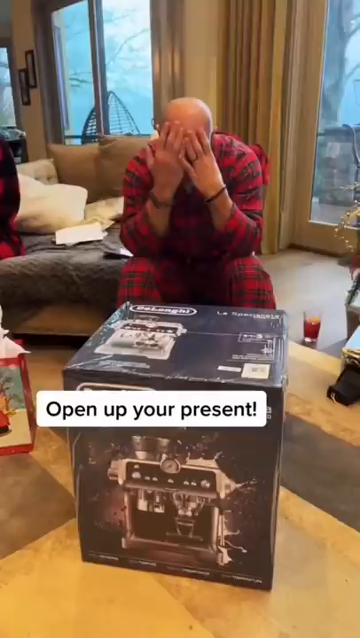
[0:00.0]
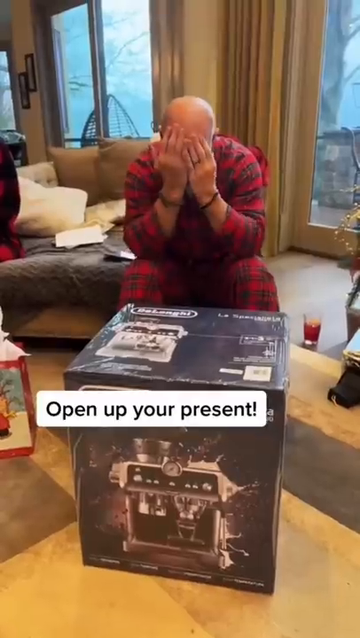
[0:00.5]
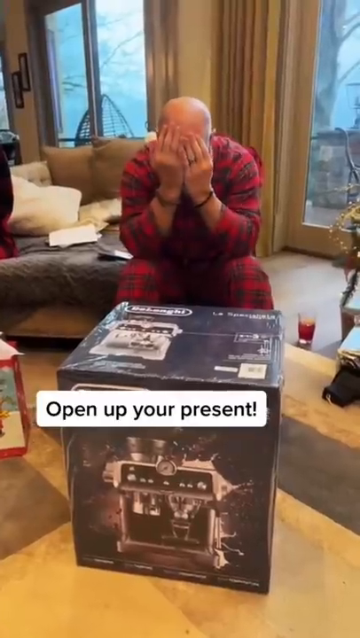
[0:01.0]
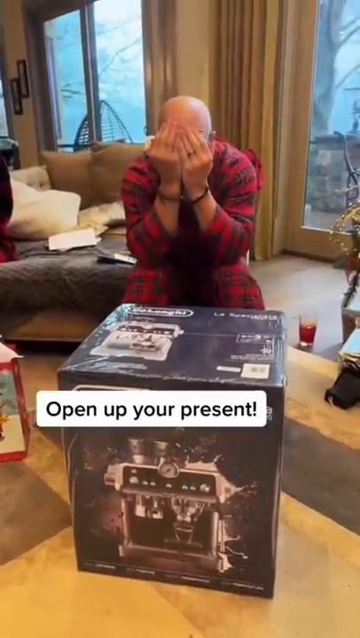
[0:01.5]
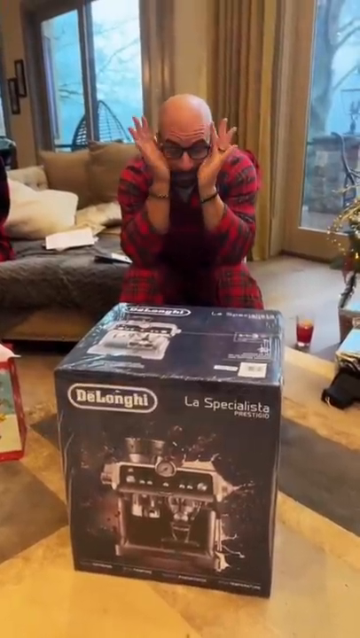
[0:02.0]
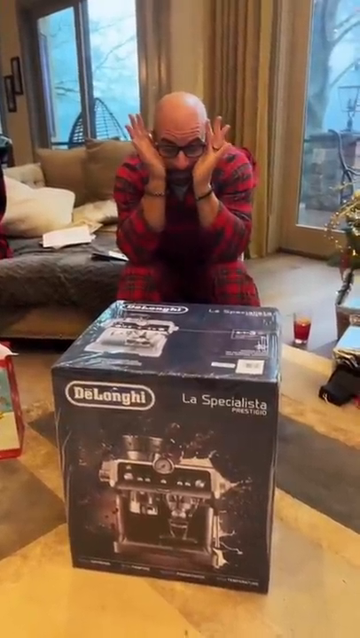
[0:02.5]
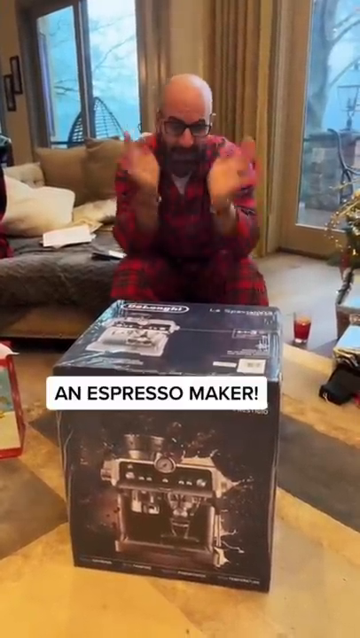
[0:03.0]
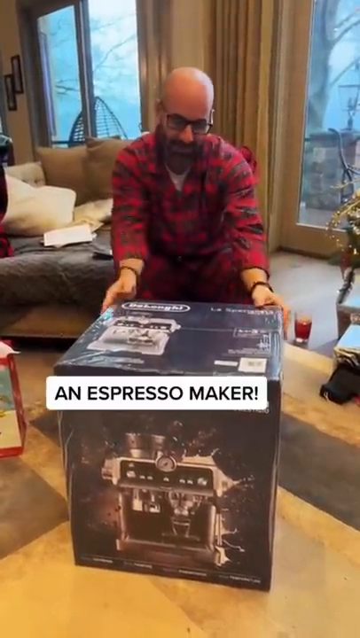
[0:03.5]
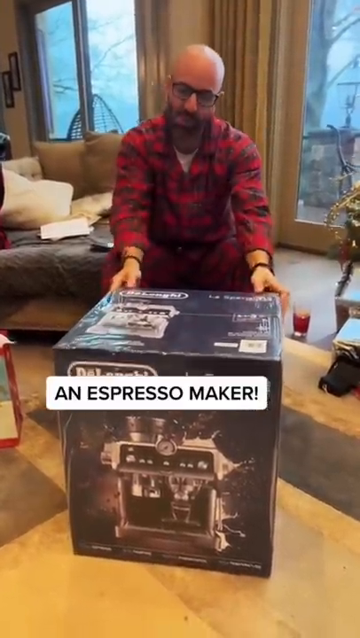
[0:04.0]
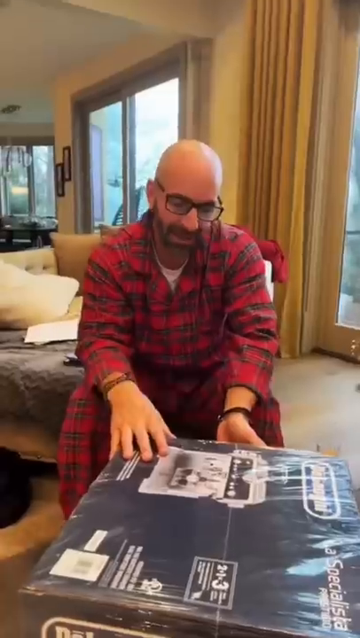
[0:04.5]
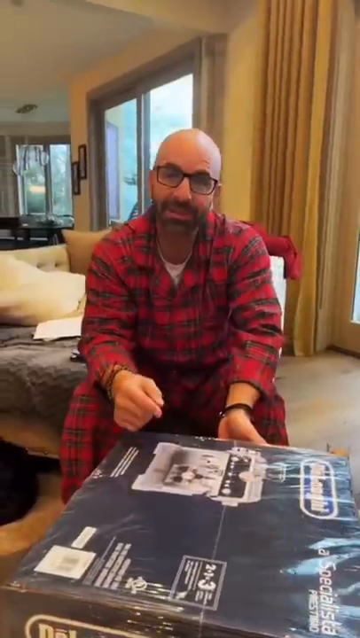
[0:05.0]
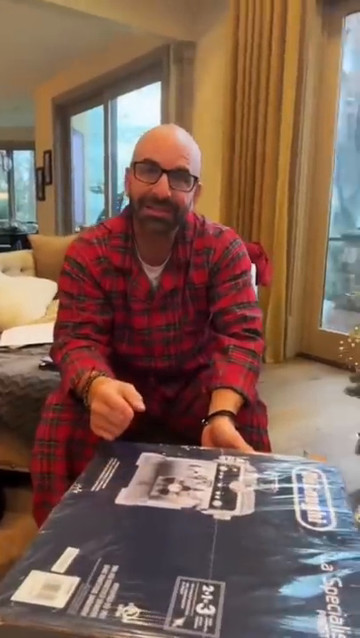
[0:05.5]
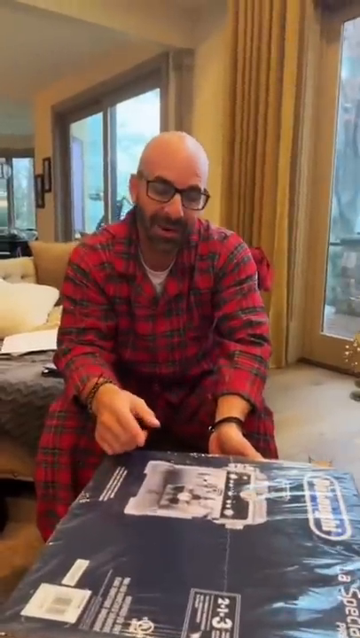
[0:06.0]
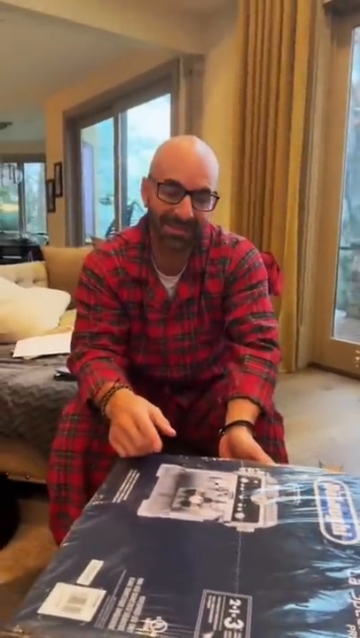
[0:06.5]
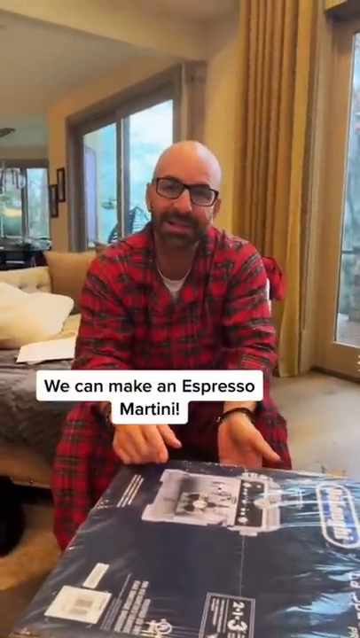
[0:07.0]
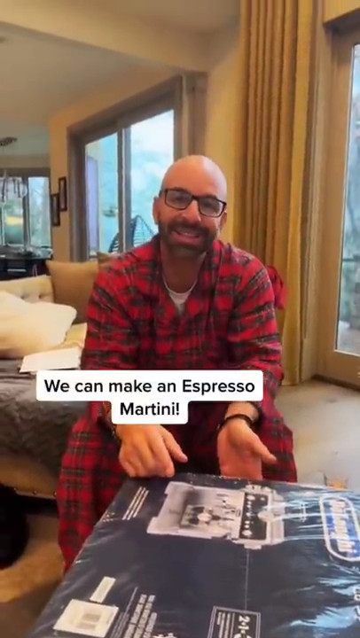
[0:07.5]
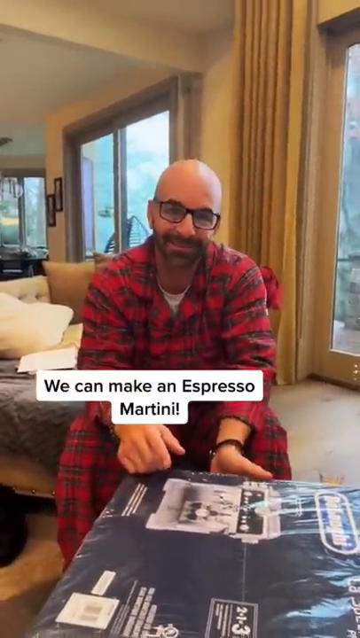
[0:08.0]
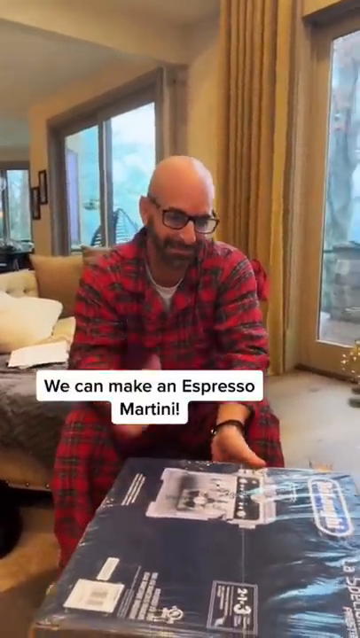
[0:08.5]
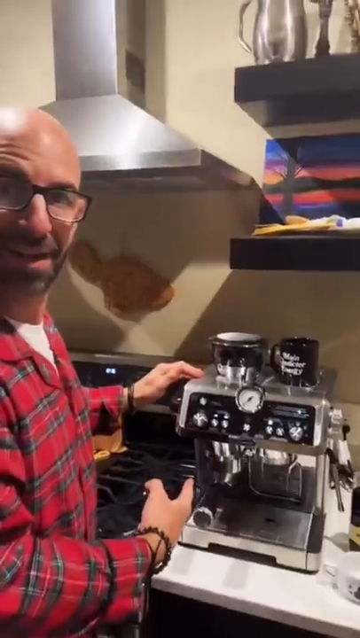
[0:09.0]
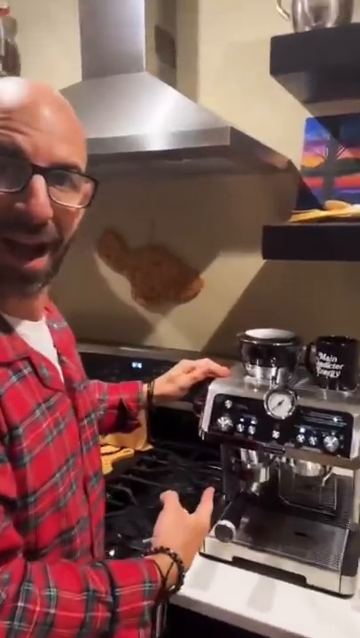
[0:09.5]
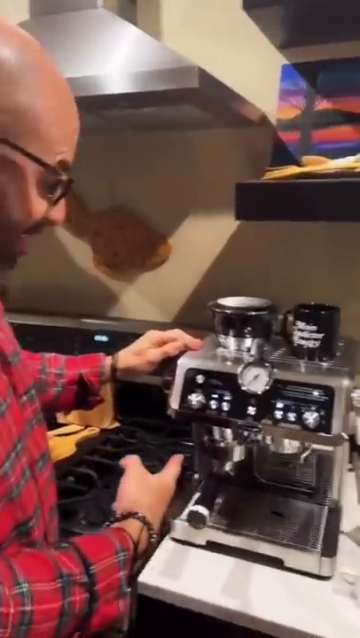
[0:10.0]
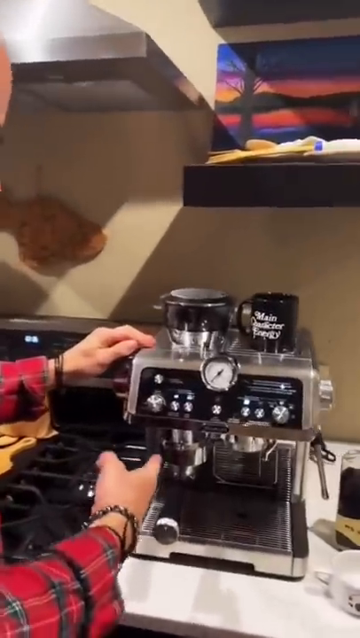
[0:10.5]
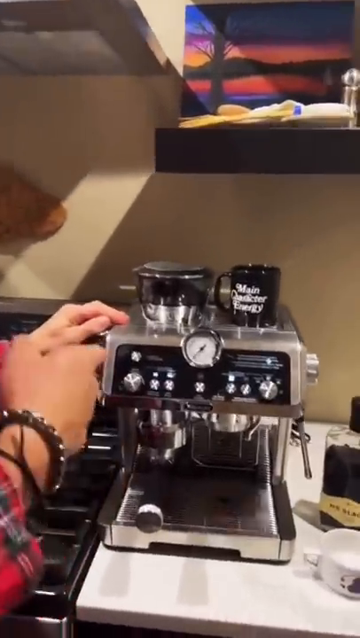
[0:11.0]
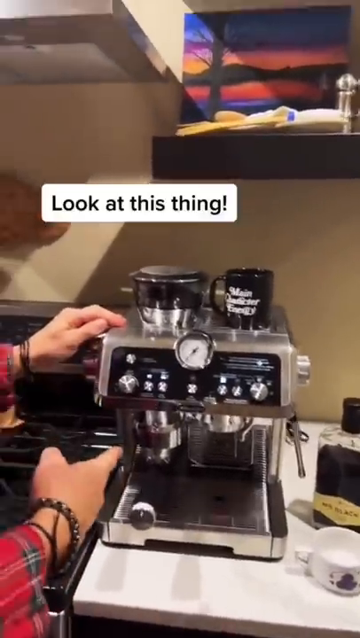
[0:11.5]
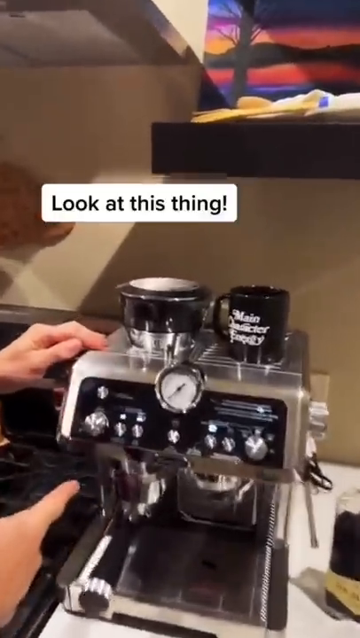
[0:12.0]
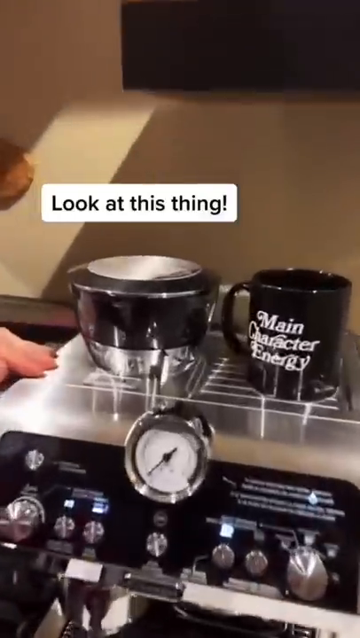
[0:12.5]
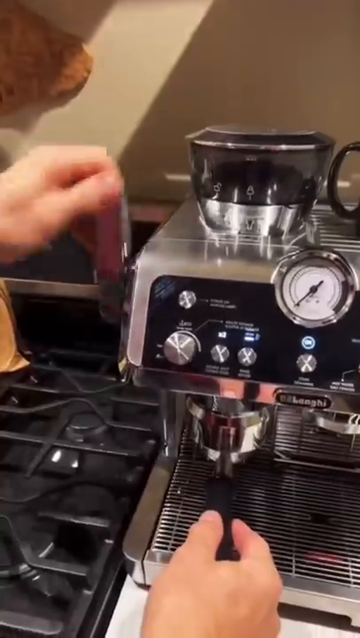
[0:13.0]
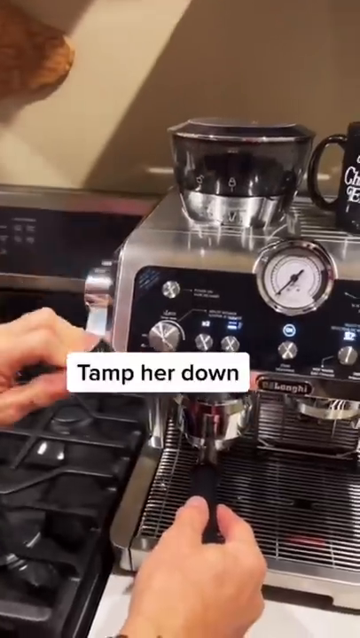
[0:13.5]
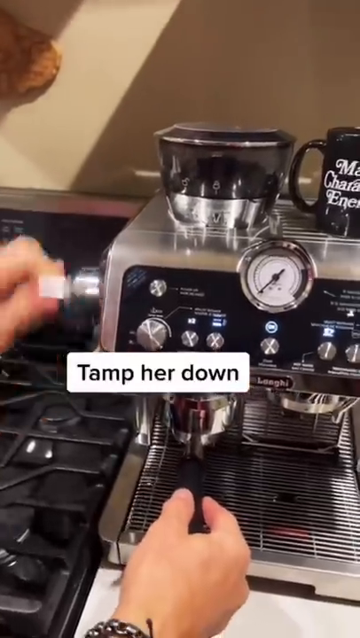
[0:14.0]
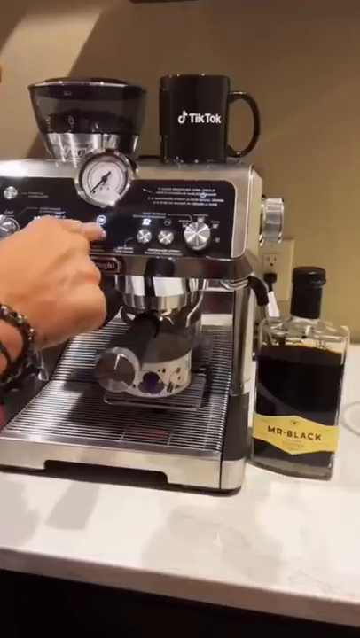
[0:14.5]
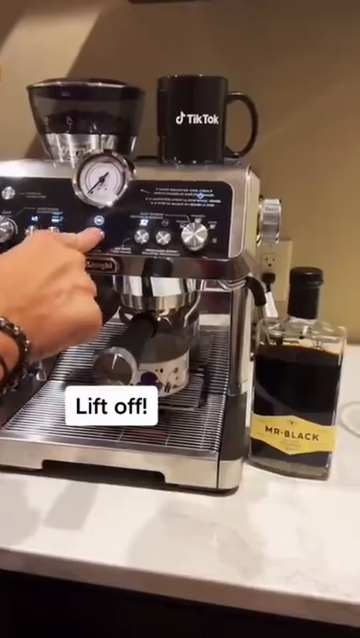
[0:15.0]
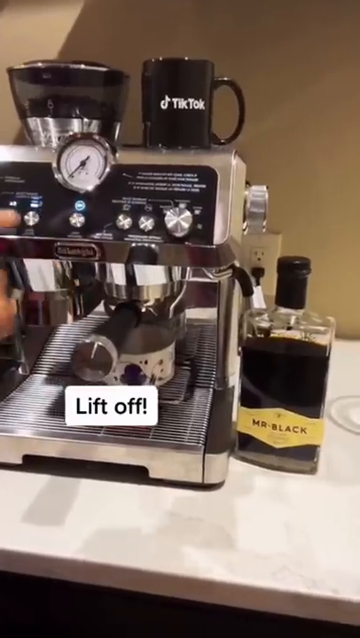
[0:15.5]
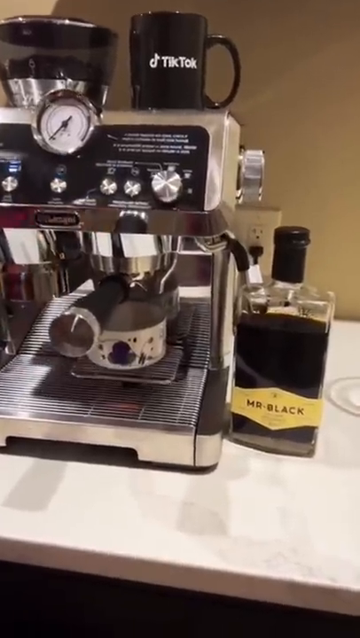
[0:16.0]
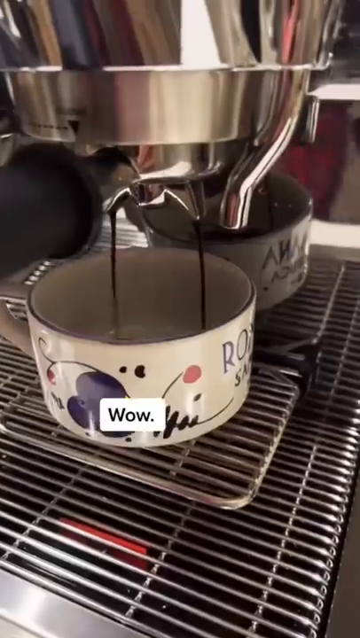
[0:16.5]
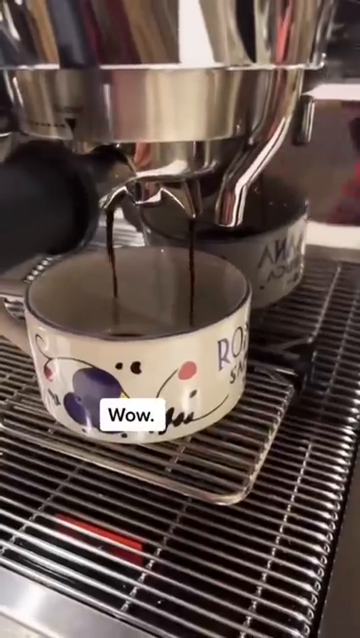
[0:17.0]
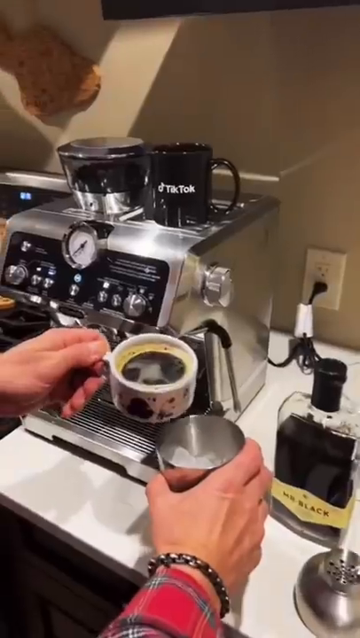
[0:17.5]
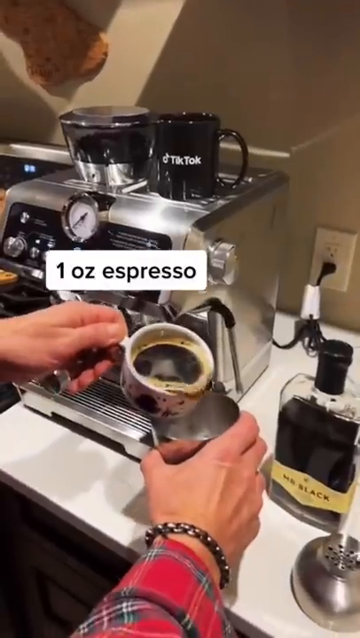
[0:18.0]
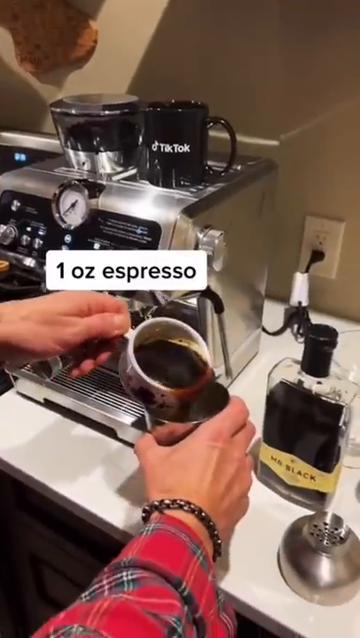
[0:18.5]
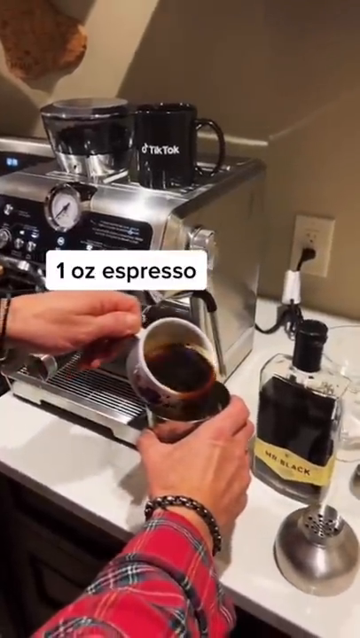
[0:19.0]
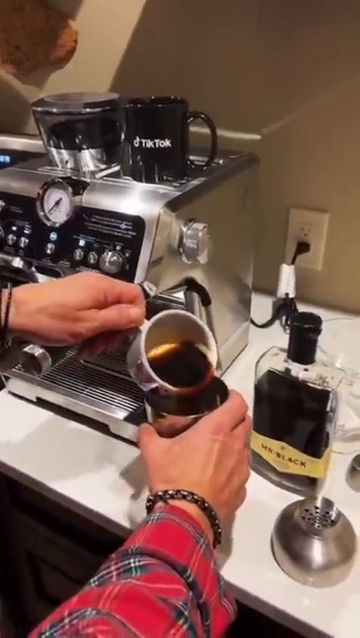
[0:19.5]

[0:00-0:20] A box containing some sort of product appears, with the superimposed text "open up your present" over it. A bald, older man is seated on a couch behind the box, wearing a red flannel with black plaid, his hands covering his face. He peeks out from his hands and pulls them back, revealing that he wears glasses, and the text "an espresso maker" is superimposed over the front. He pulls a product toward him and kind of smiles, seeming to talk about it, while text reads "we can make an espresso martini". The product is then shown unboxed on the counter; he points to it with his right hand and holds it with his left. It is silver colored and kind of shiny, with a pressure kind of dial on the center top. The view closes in on the product with the text "look at this thing". On top of it there is a black cup on the right side, and to the left, also on its top, a more silver sort of cup. The view closes in on the dials, the text "tamp her down and lift off" appears, and somebody is shown kind of making coffee.